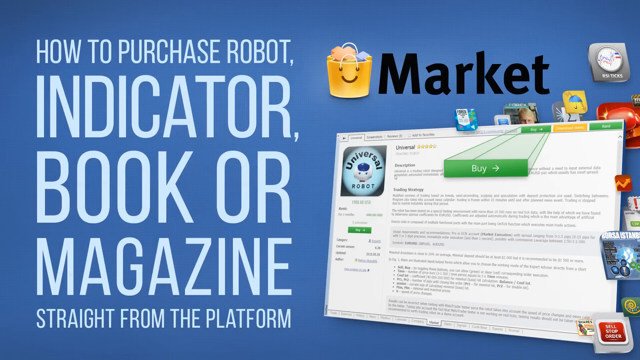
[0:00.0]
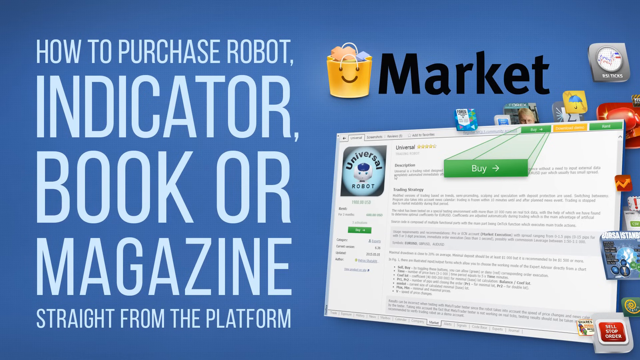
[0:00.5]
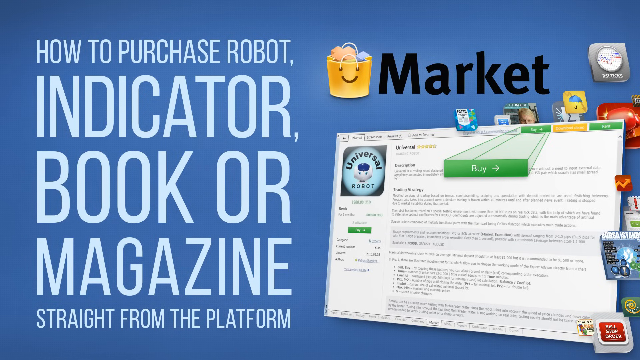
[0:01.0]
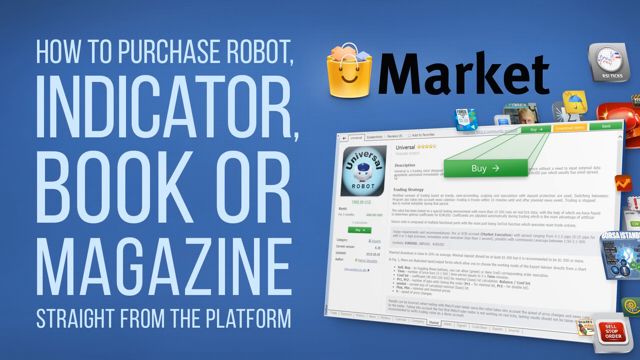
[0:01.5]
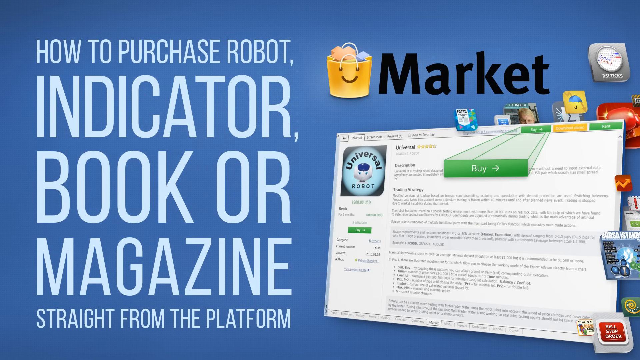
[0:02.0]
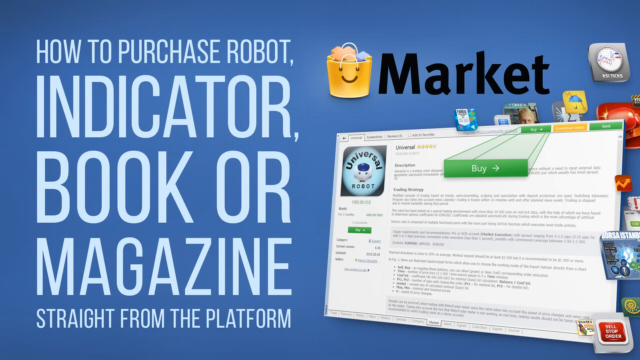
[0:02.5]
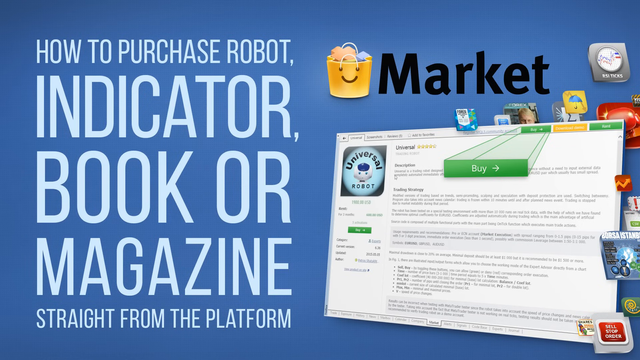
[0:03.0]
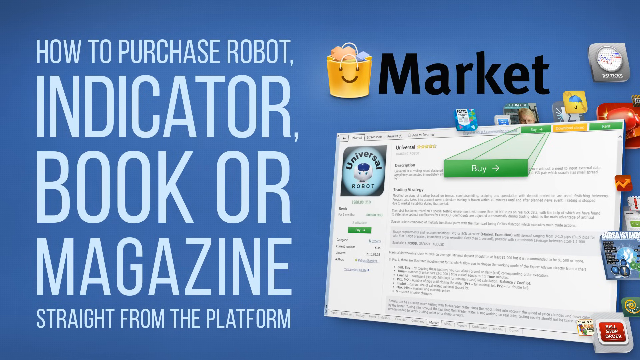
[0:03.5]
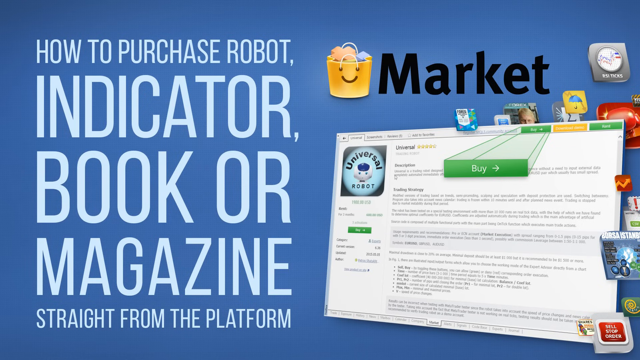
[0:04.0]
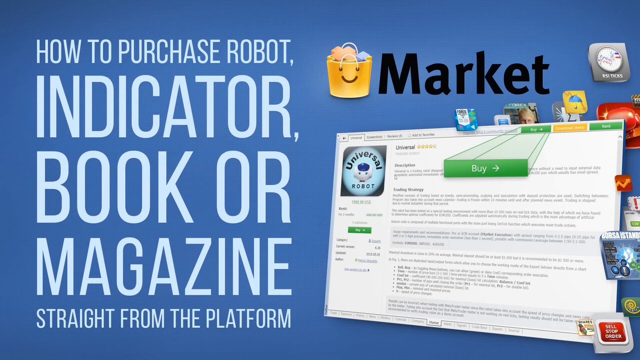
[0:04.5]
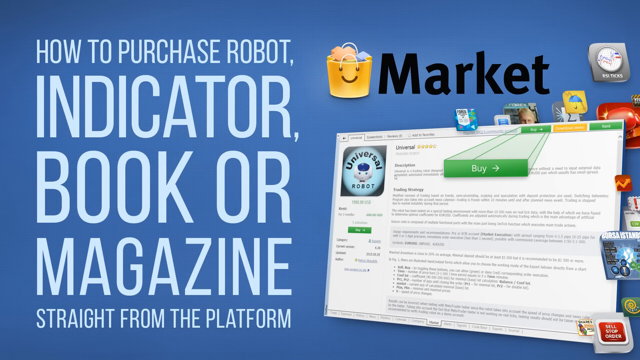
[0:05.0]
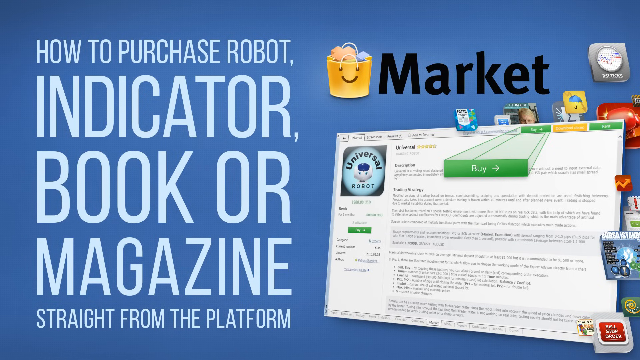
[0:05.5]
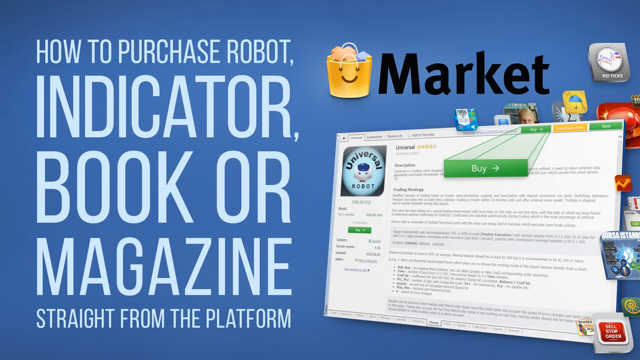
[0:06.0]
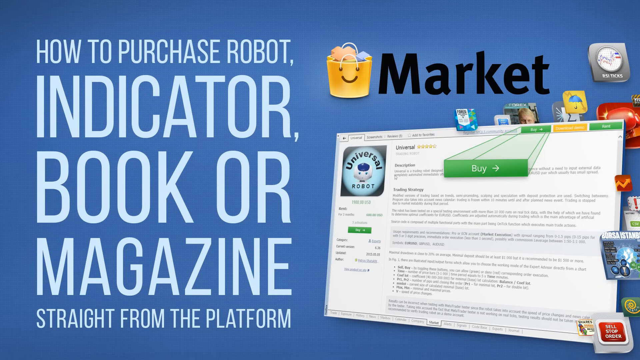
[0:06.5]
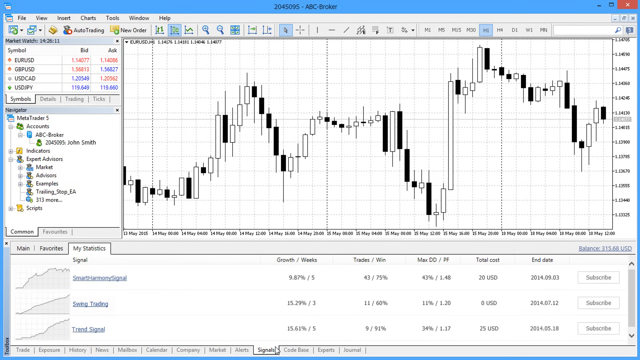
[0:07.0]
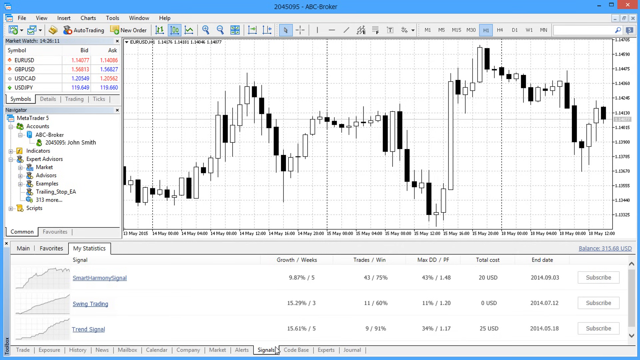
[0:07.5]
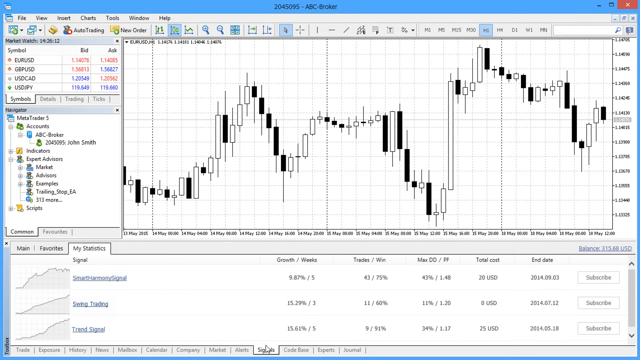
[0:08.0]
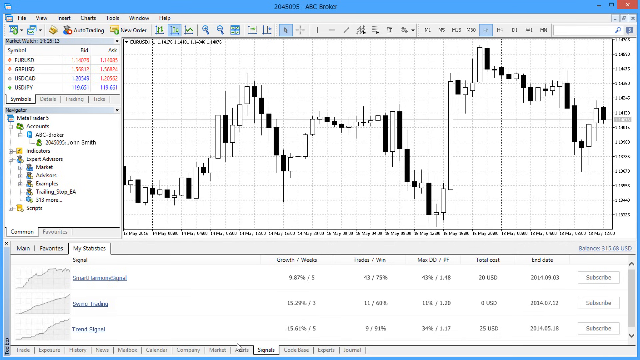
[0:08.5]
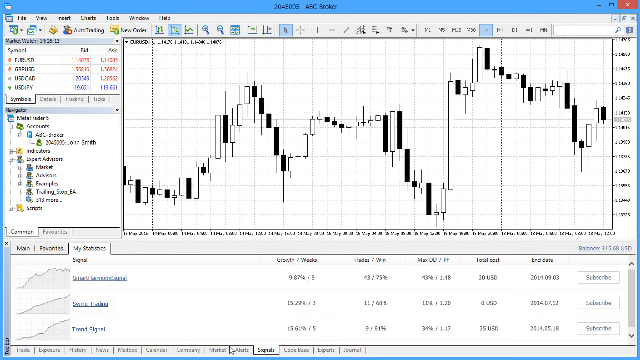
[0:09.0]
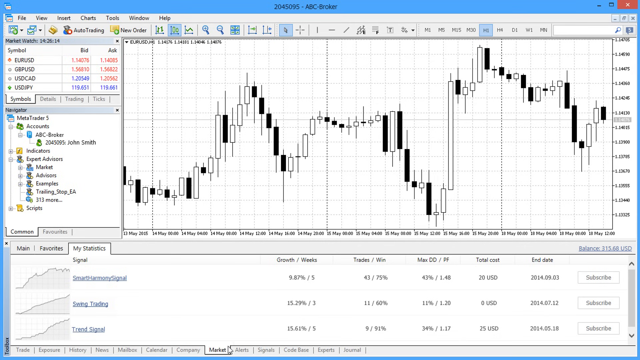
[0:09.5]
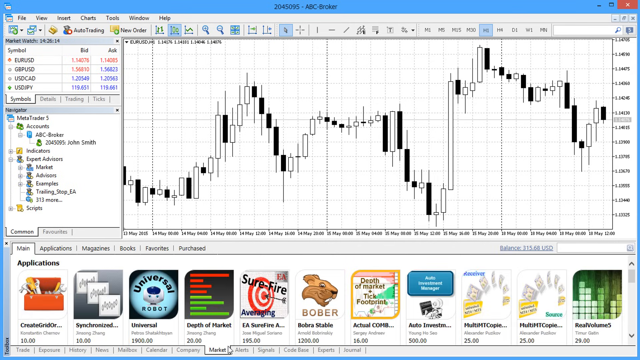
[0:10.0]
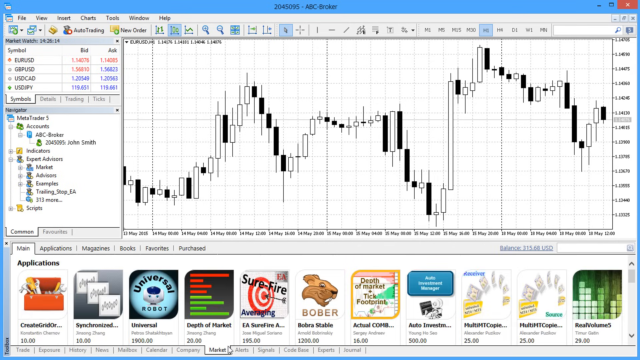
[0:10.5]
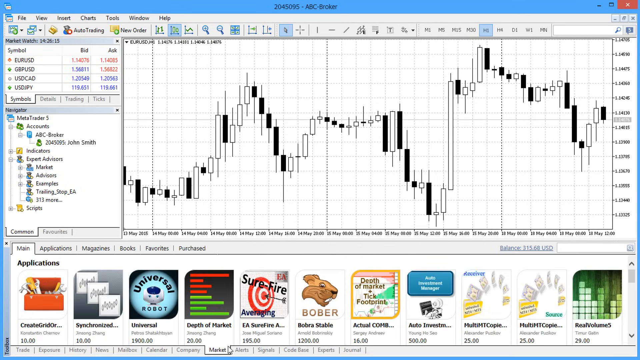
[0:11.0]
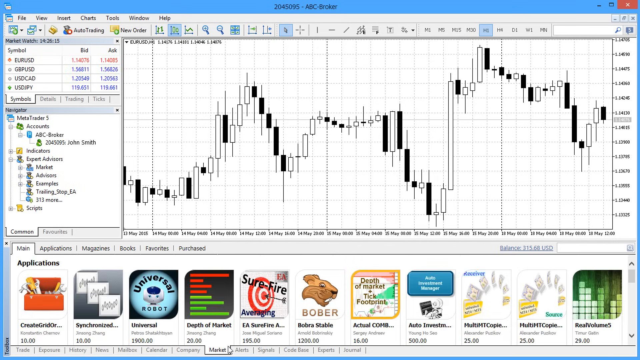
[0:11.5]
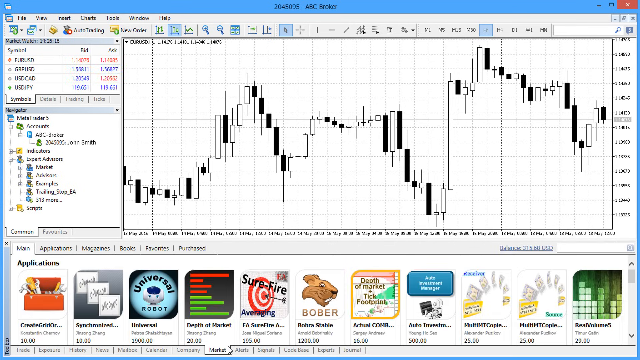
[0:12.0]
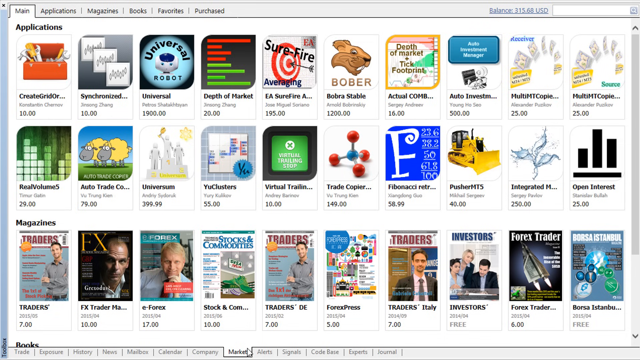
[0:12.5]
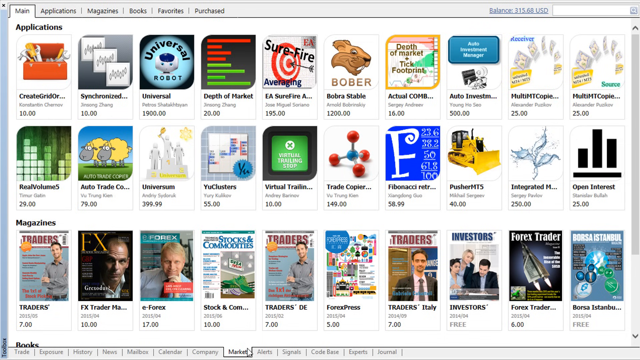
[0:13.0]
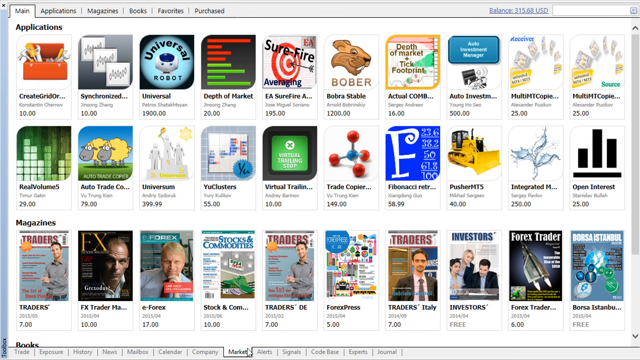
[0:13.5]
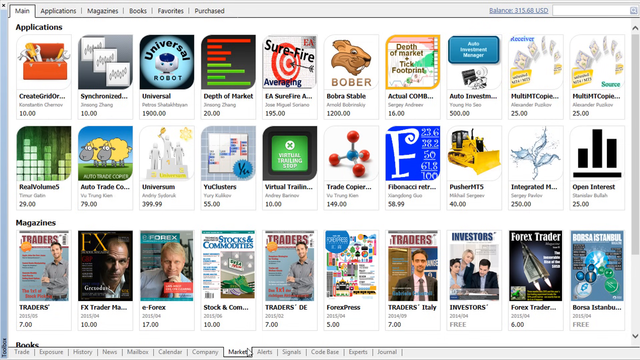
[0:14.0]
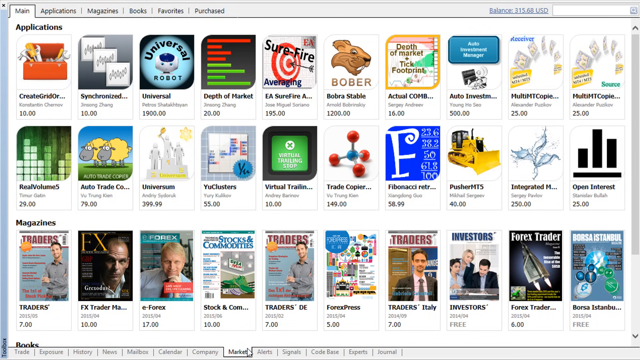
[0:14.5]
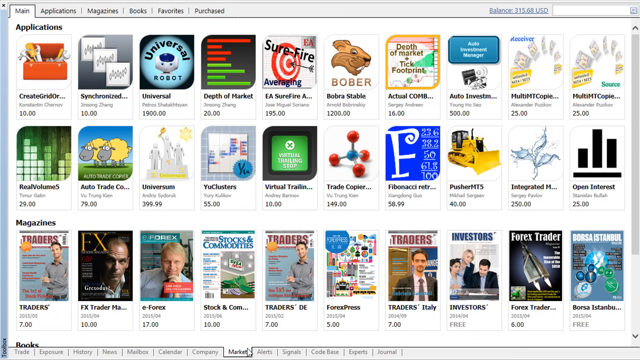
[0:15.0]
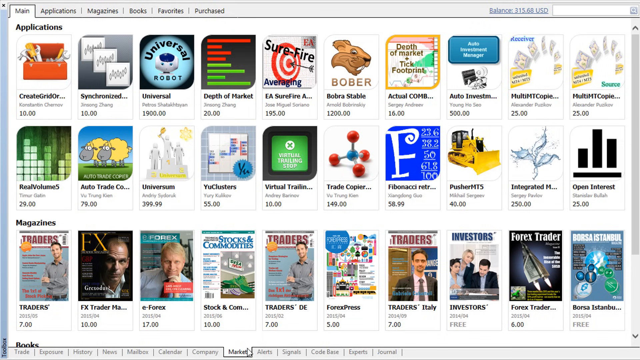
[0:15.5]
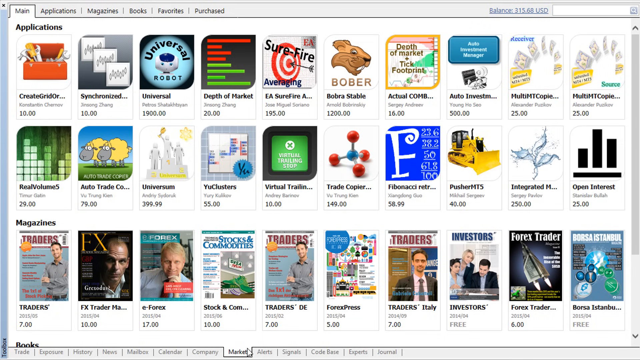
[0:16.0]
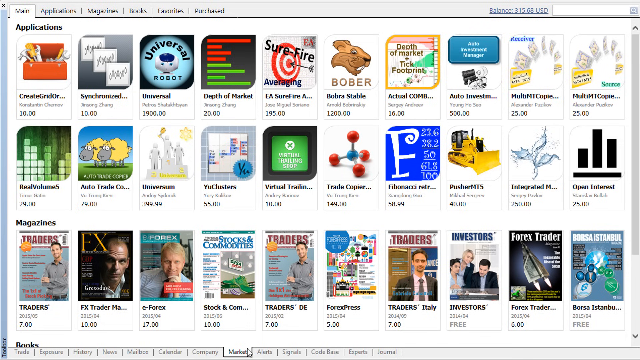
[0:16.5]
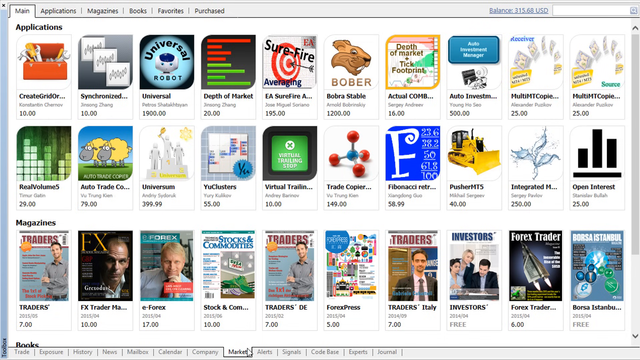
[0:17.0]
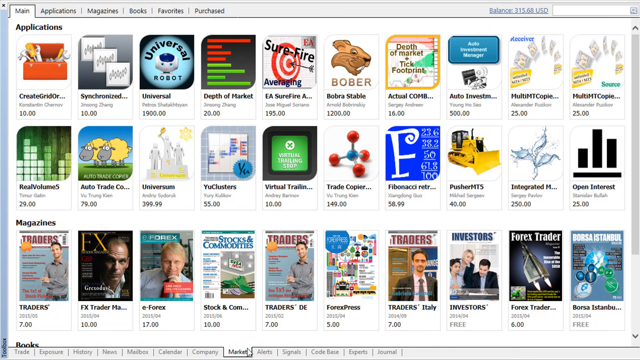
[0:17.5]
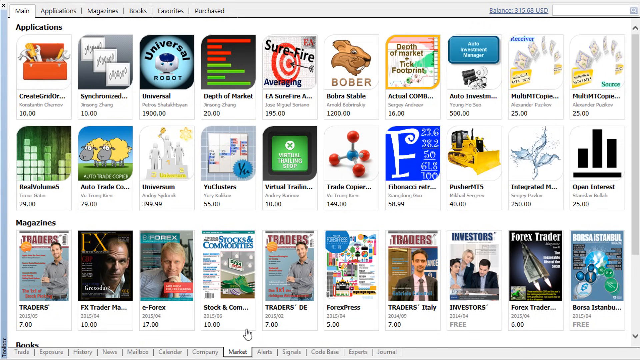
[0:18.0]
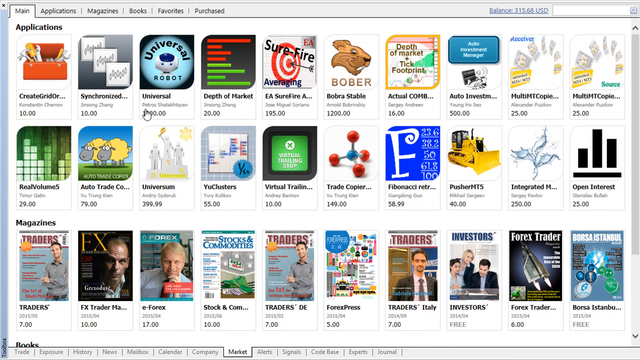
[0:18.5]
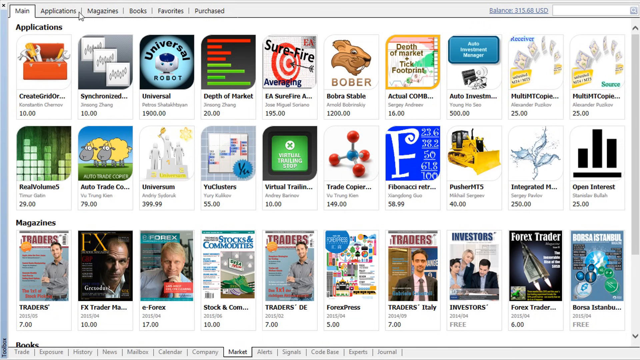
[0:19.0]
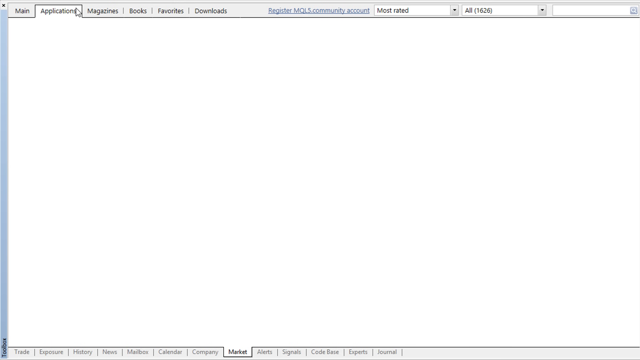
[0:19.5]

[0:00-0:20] The video opens on a front page. On the left side, text reads "how to purchase robot Indicator book or magazine straight from the platform". On the right side is a bucket with a smiling face, and next to it is the word "market" in black font. The screen then changes to an open program window showing a stock chart. Along the bottom, many different applications are lined up horizontally. Toward the left are what look like different stocks, with their symbols shown. The stock chart has black and white candles, with the stock's price on the right side and the dates along the bottom of the chart. Up above, text reads "ABC Broker". The whole window then changes to show two rows of applications and one row of magazines, with prices below them. The mouse cursor goes up and clicks the applications tab in the top left corner, and the page changes.